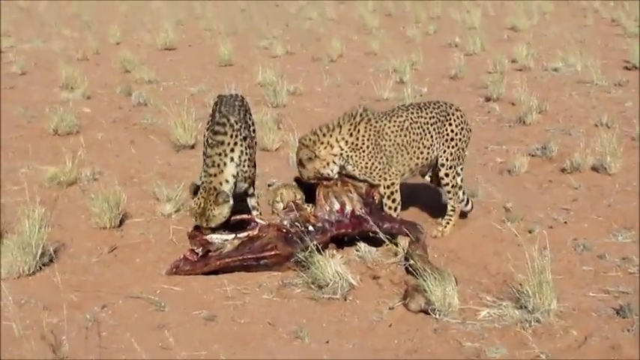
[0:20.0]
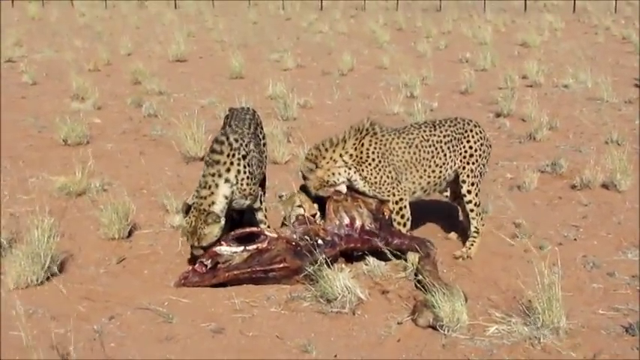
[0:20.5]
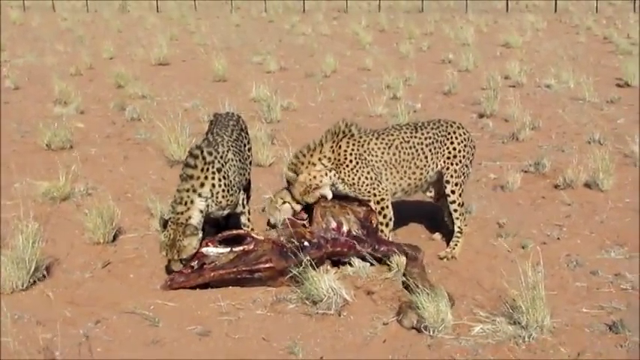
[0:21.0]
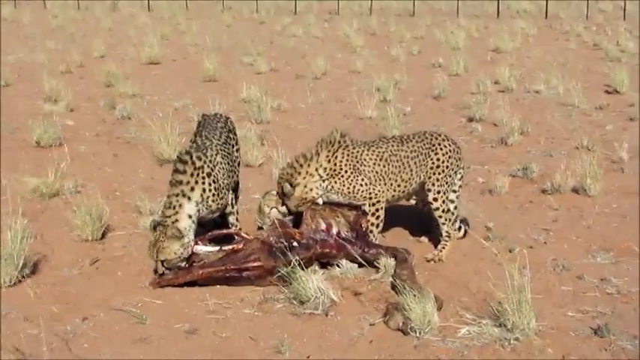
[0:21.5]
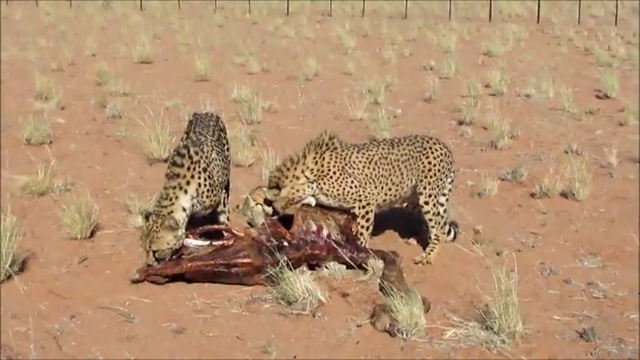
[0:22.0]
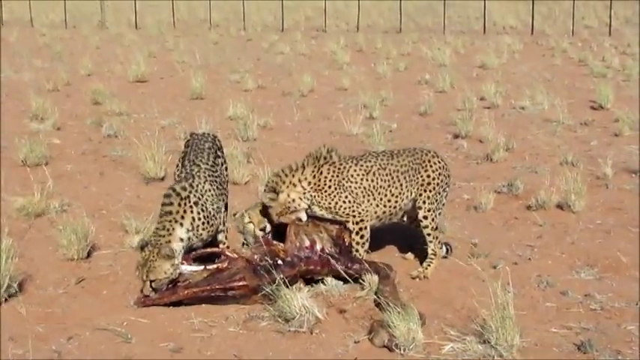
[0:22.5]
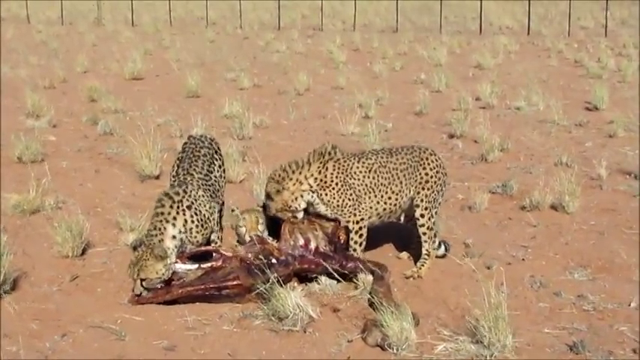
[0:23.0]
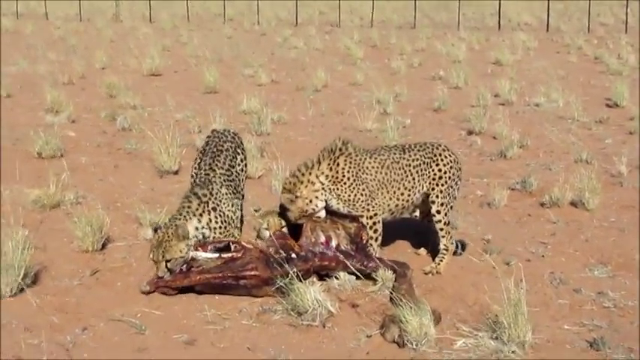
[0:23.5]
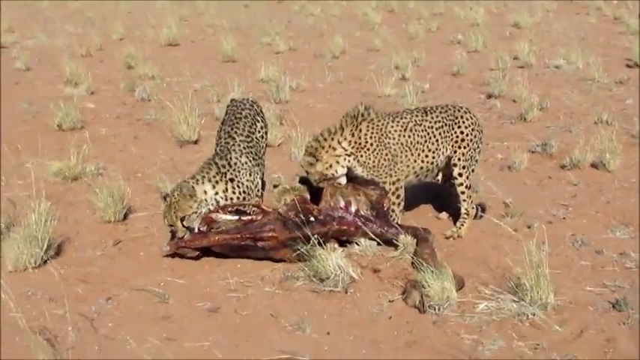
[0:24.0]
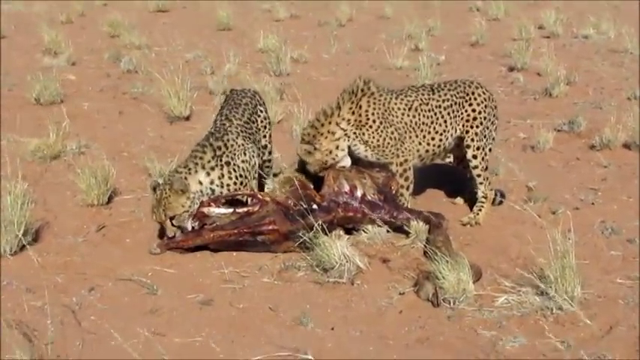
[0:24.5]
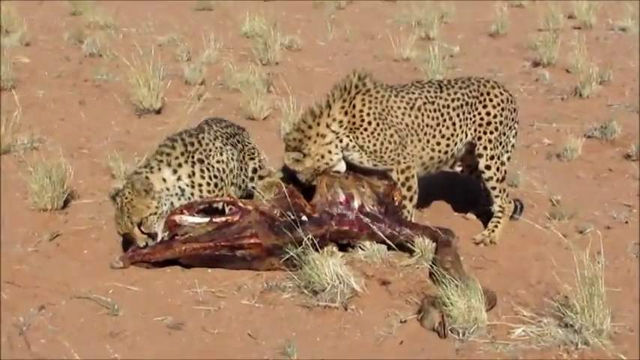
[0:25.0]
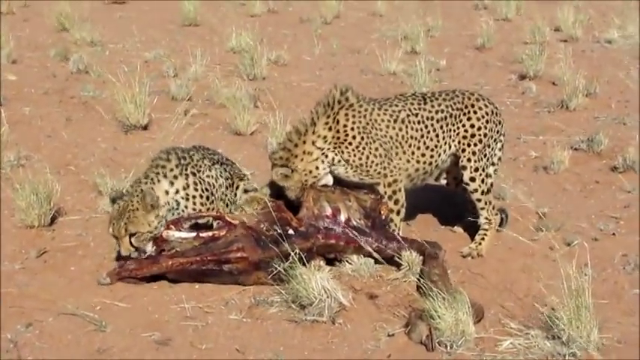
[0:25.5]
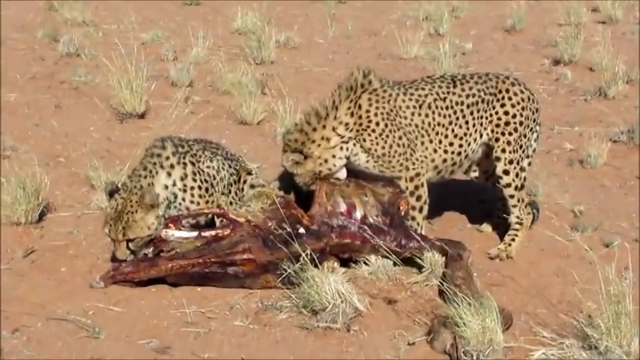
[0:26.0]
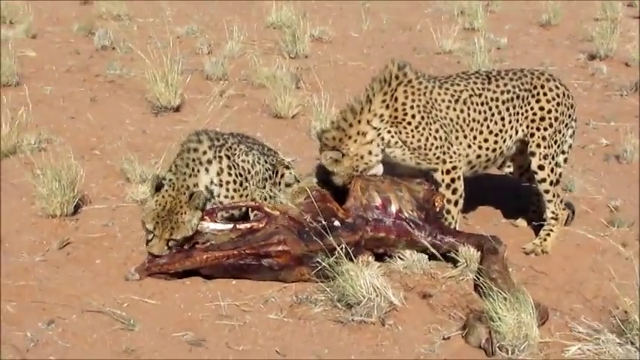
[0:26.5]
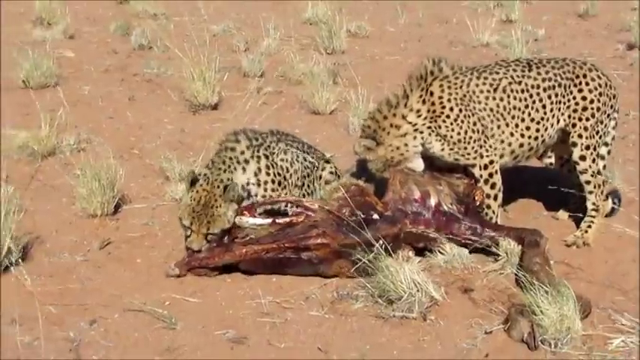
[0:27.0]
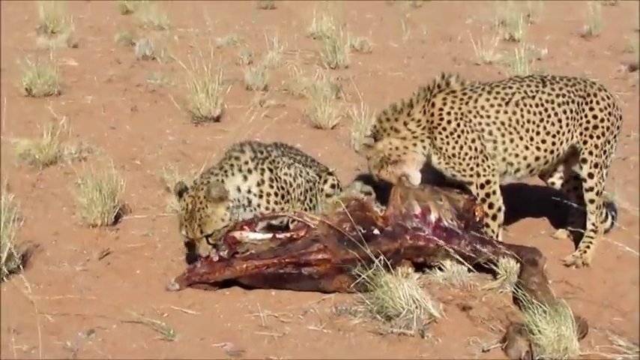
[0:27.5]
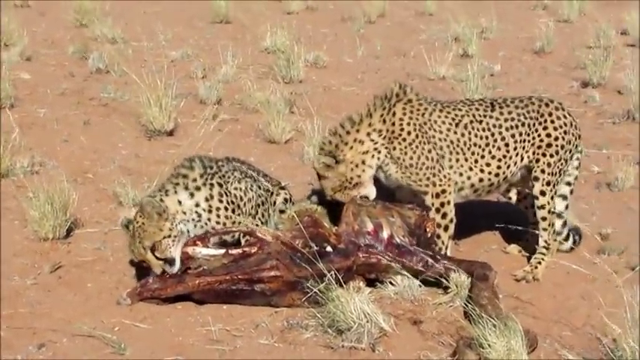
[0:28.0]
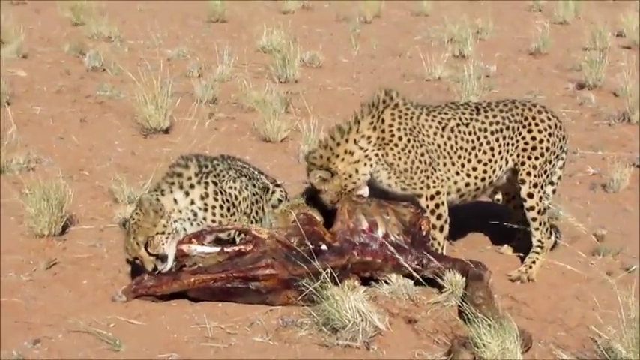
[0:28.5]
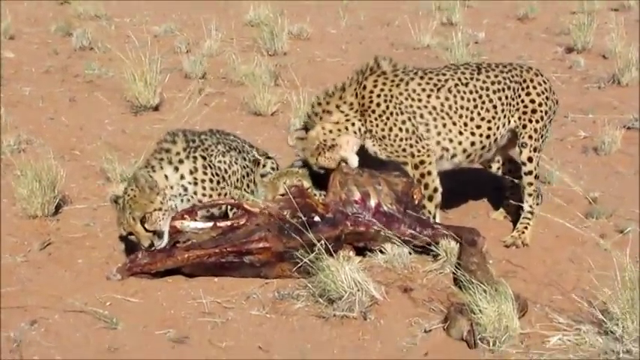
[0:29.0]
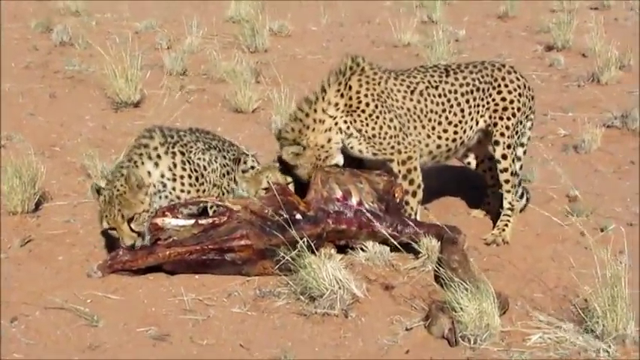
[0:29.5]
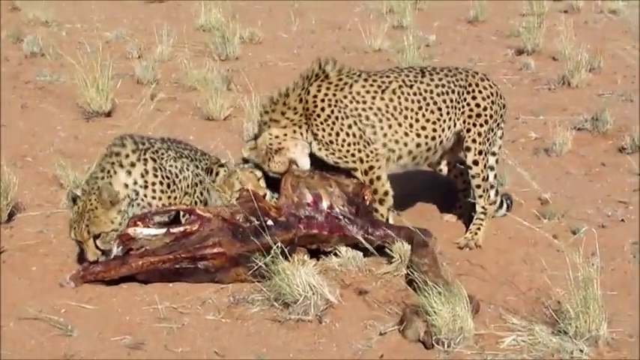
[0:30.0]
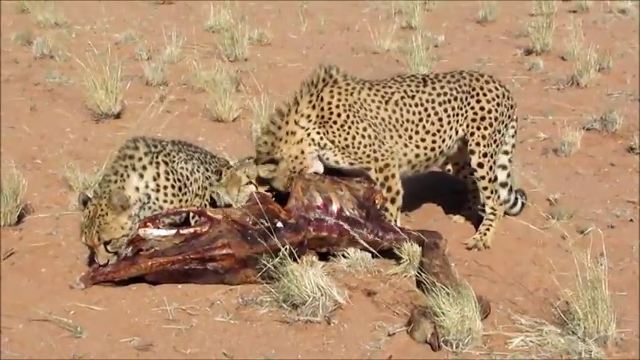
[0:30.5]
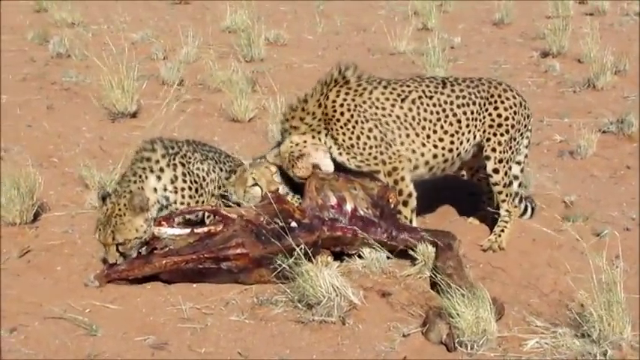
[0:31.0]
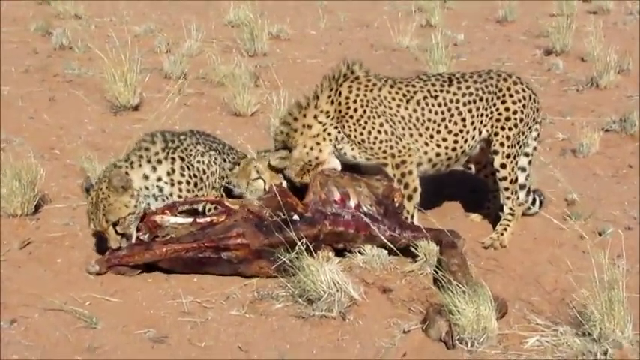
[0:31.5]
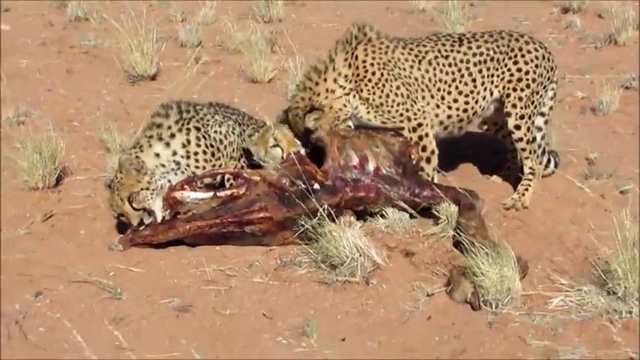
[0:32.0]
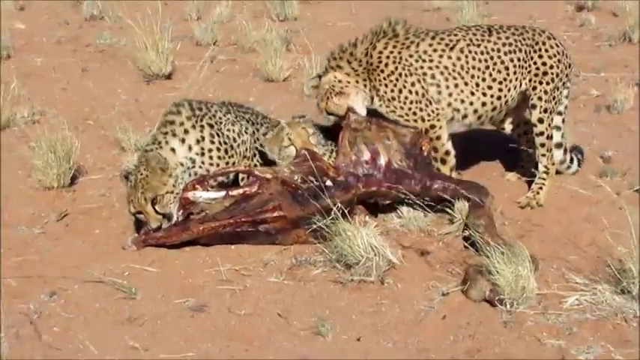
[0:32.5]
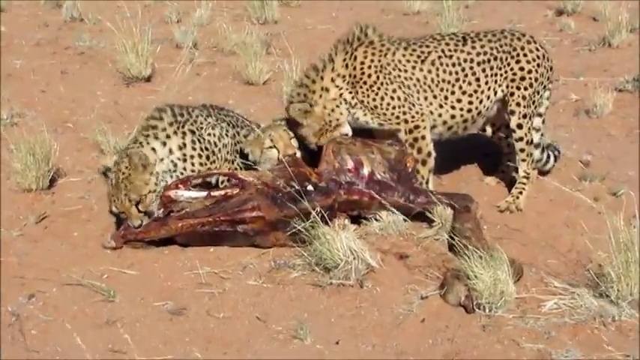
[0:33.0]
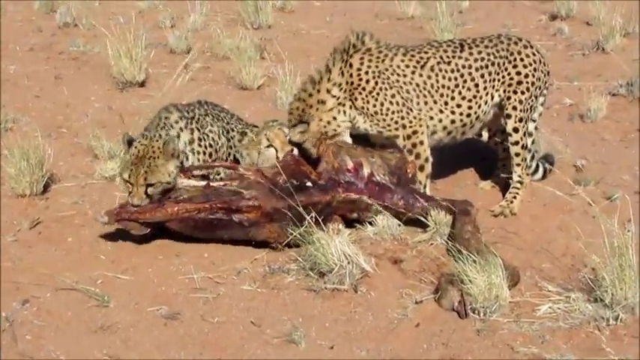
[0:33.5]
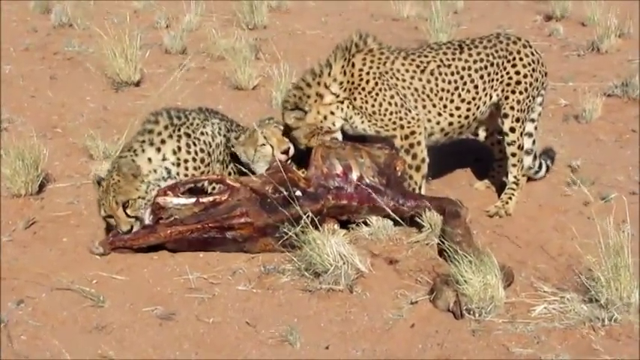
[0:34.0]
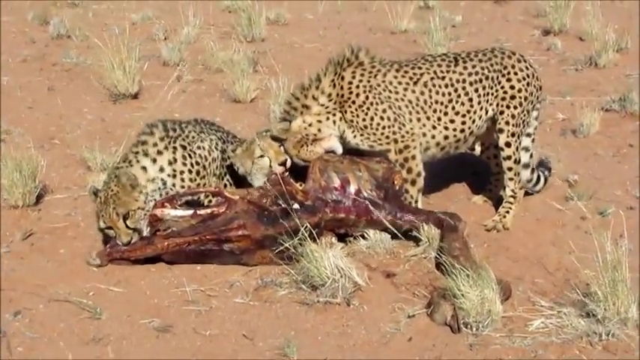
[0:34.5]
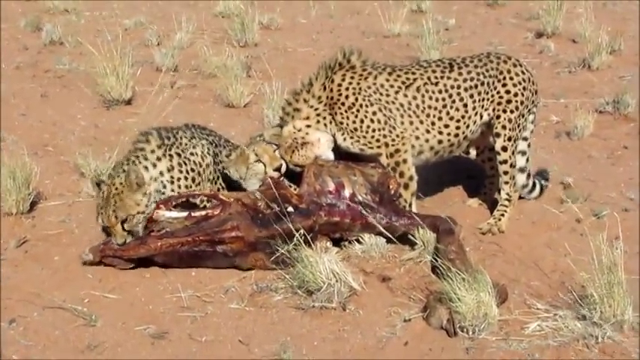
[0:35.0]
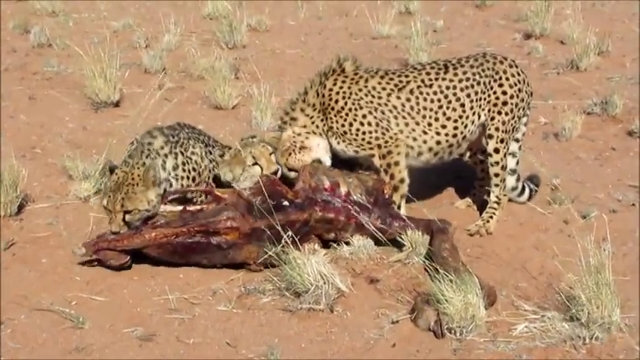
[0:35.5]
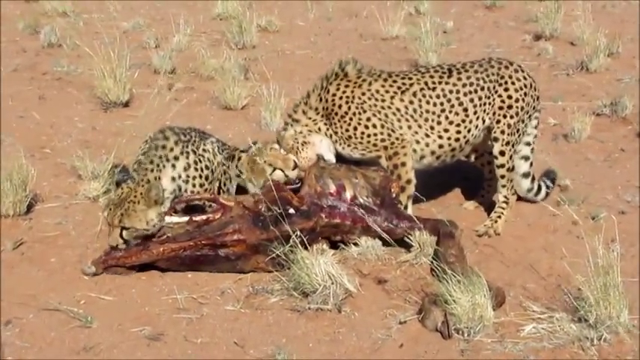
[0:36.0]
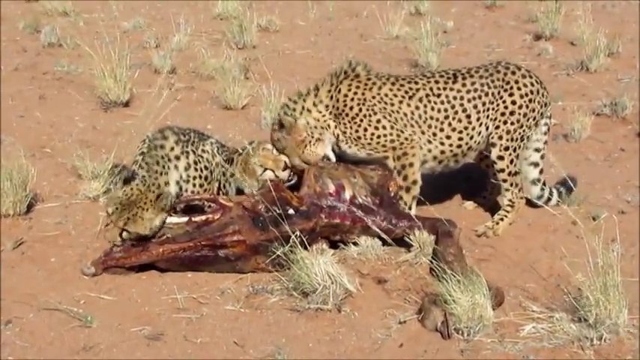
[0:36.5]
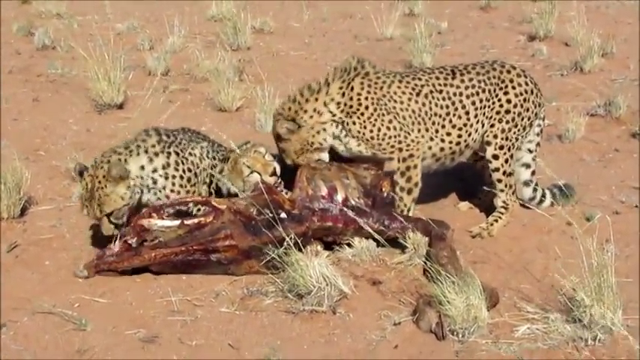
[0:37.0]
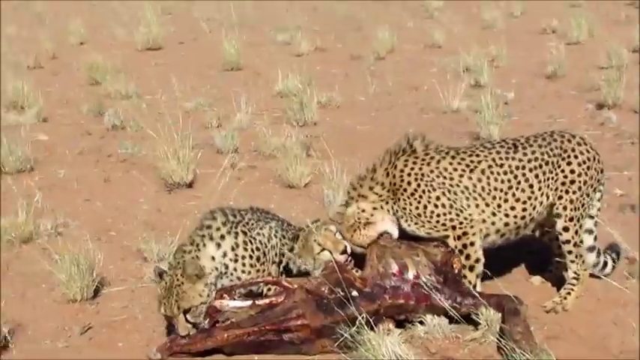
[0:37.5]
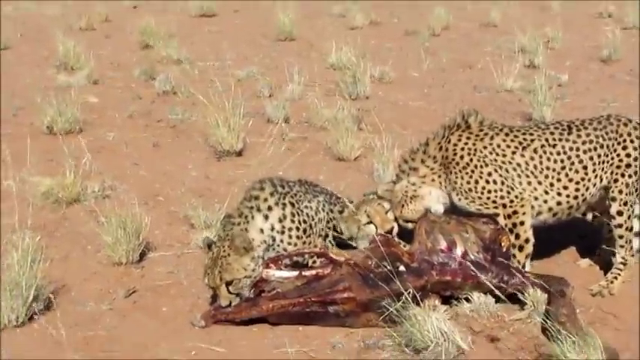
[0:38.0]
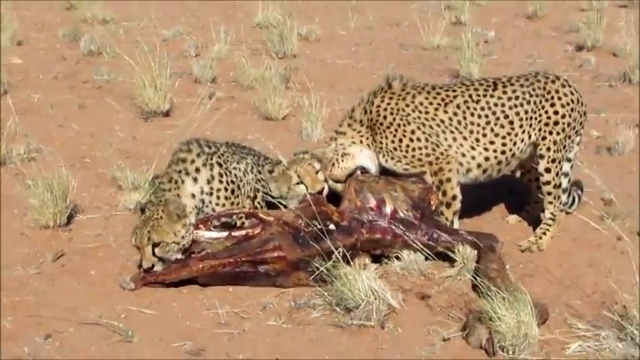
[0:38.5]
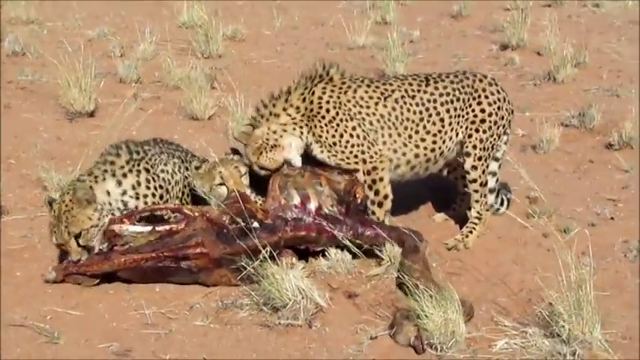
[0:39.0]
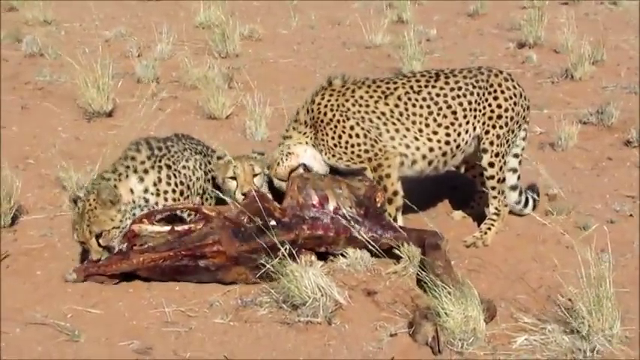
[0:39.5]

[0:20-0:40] Three yellow cheetahs with lots of black spots, the one on the left with a slight white stripe down the side of its neck, eat a carcass in the middle of a dirty, brown, arid bushland area. The two cheetahs on the right are very close to each other with their heads basically facing each other, while the cheetah on the left is a little further apart from the group. The cheetah on the left finally sits down and wrenches its head to the side to get meat off the bones, while the cheetah on the right finds a bit of flesh not attached to a bone, clamps its teeth down and pulls upward, stretching the skin as it tries to eat it. The cheetah in the middle is not eating the carcass but looks at the cheetah on the right, occasionally nuzzling it slightly with its head.